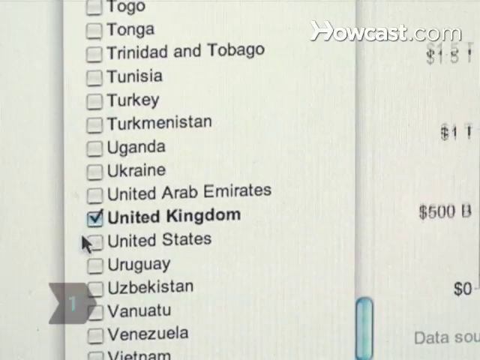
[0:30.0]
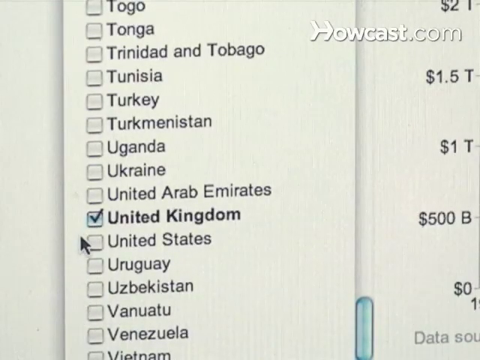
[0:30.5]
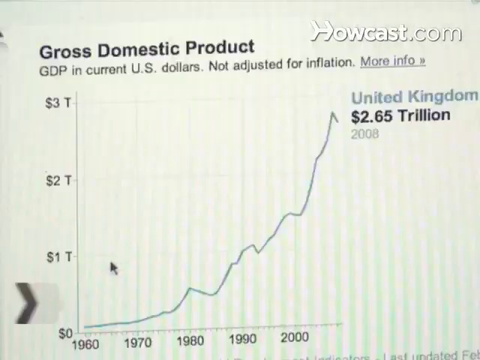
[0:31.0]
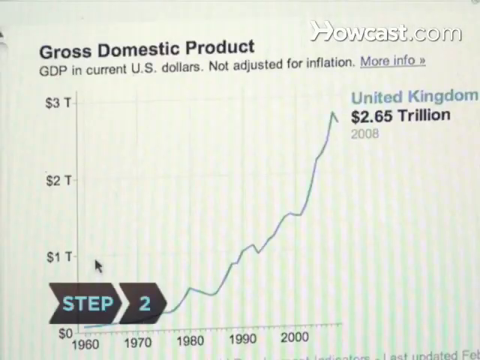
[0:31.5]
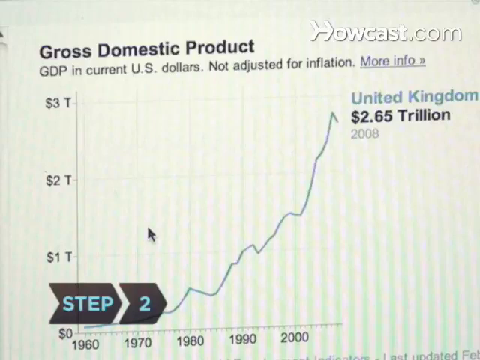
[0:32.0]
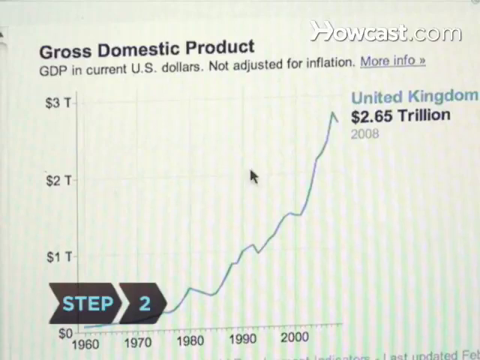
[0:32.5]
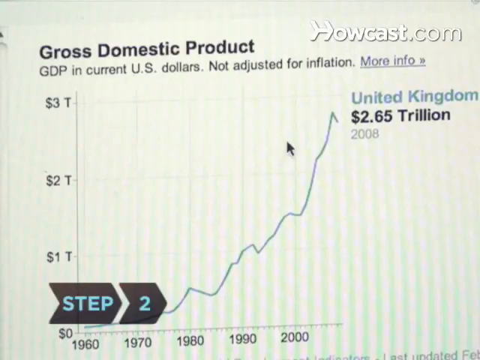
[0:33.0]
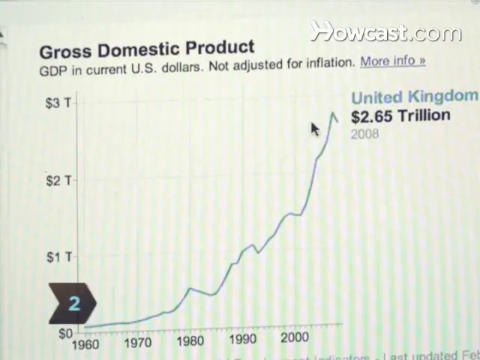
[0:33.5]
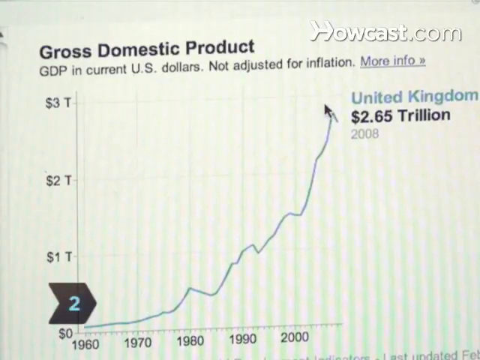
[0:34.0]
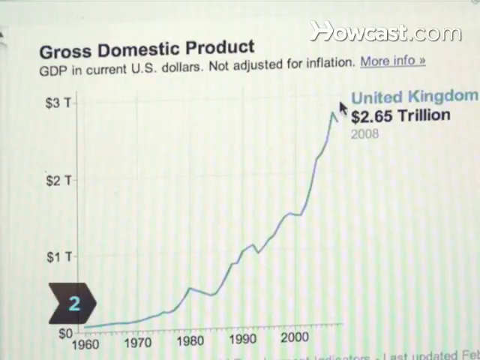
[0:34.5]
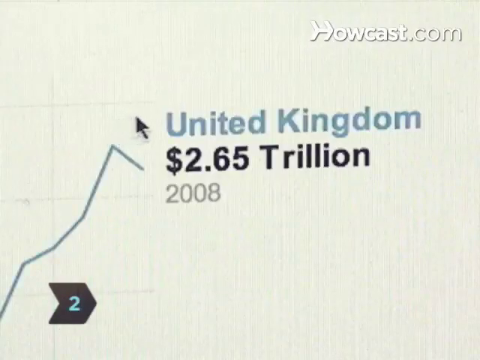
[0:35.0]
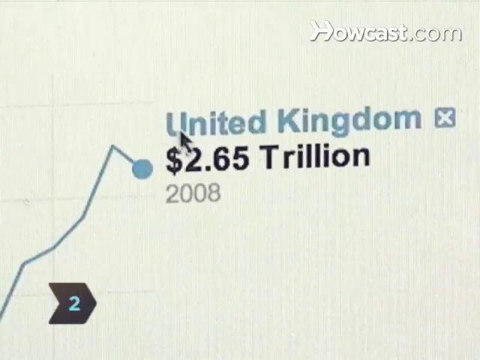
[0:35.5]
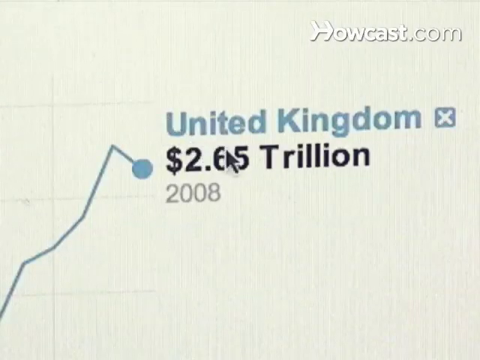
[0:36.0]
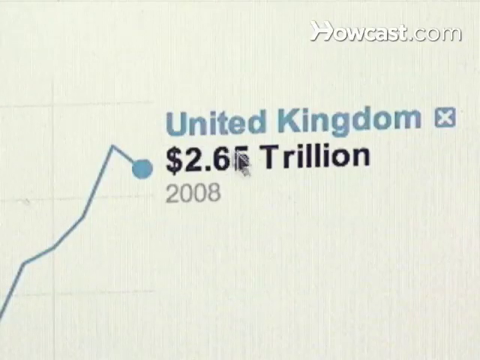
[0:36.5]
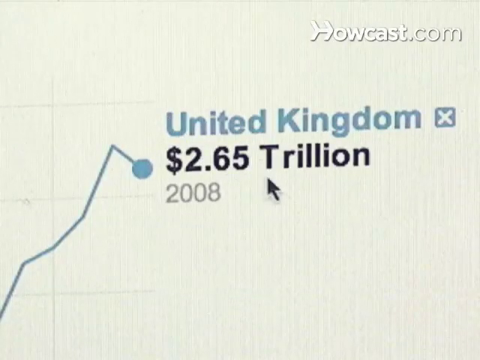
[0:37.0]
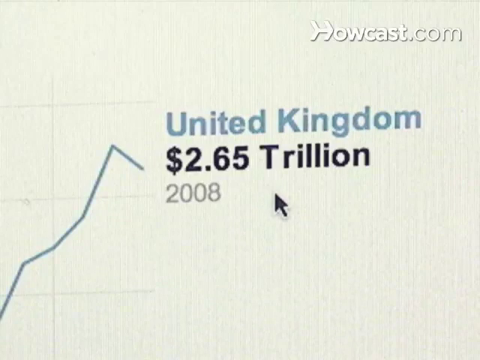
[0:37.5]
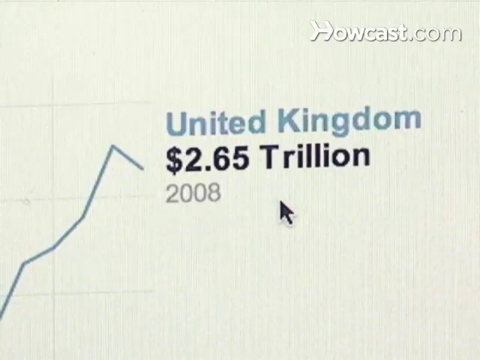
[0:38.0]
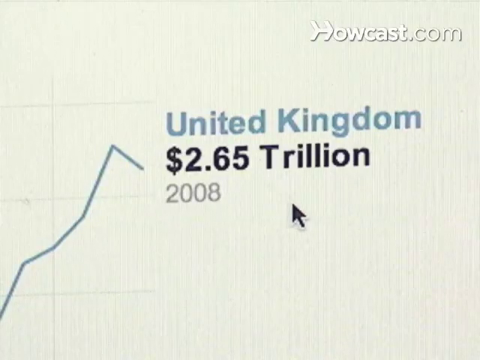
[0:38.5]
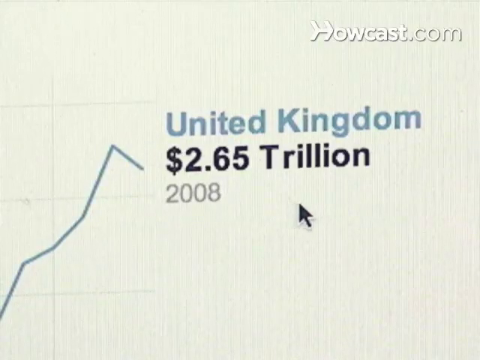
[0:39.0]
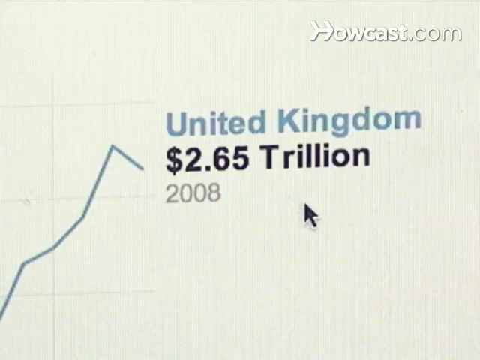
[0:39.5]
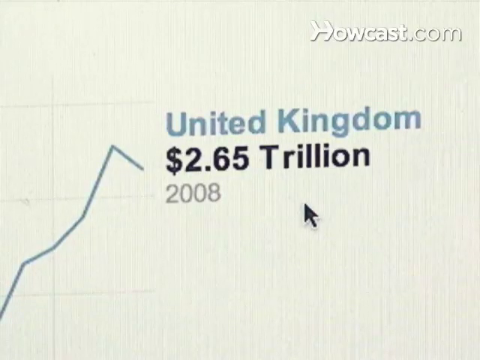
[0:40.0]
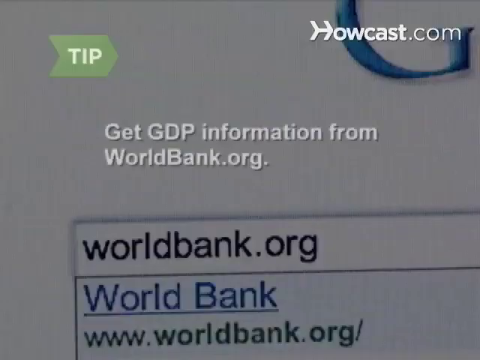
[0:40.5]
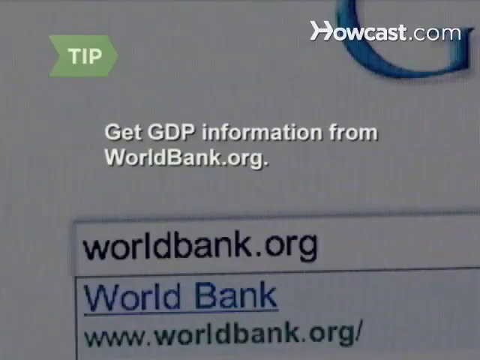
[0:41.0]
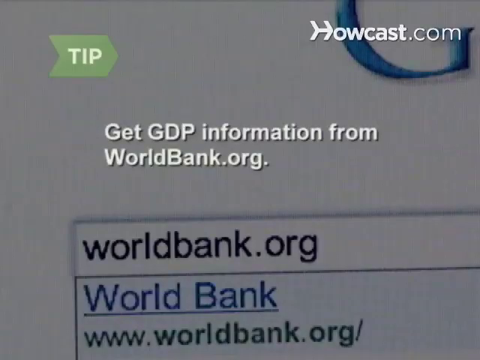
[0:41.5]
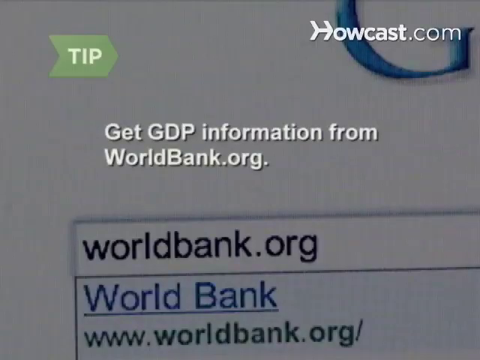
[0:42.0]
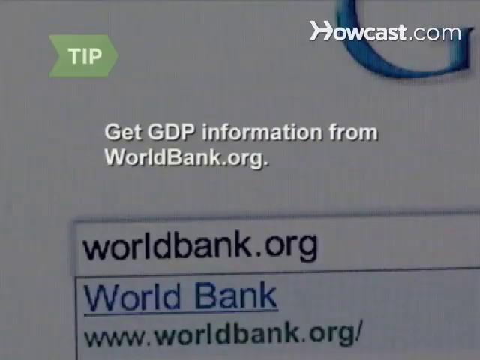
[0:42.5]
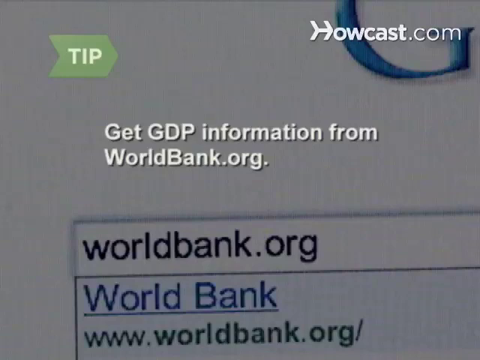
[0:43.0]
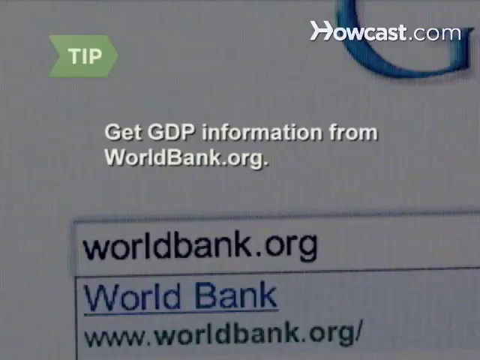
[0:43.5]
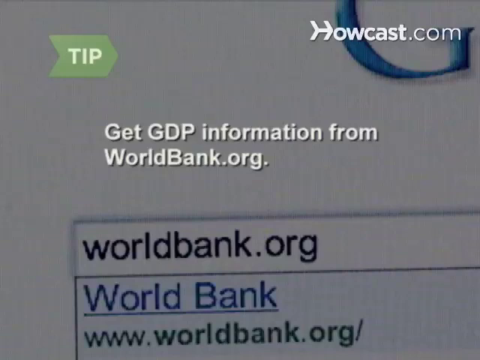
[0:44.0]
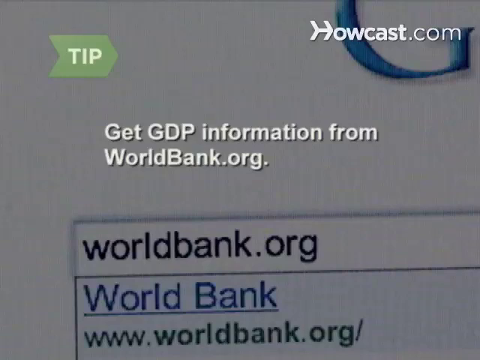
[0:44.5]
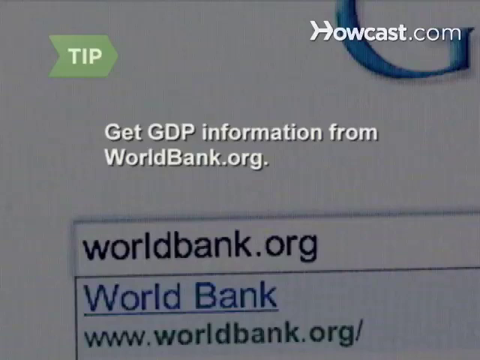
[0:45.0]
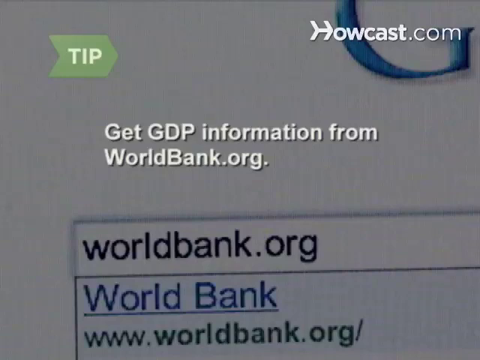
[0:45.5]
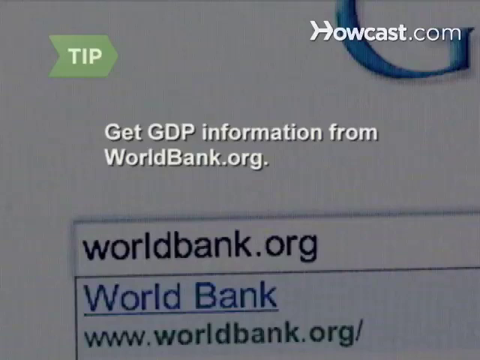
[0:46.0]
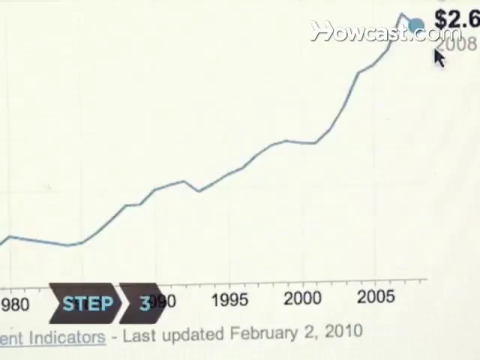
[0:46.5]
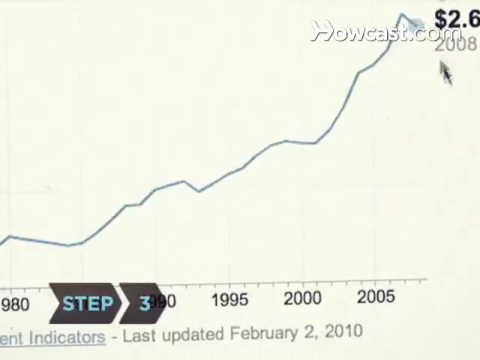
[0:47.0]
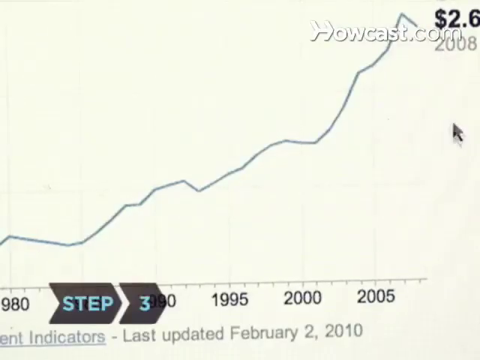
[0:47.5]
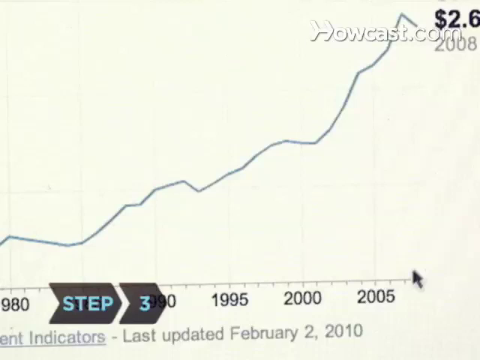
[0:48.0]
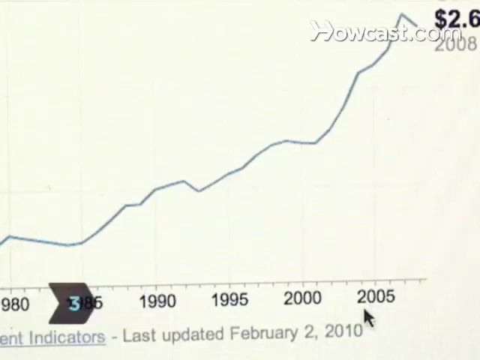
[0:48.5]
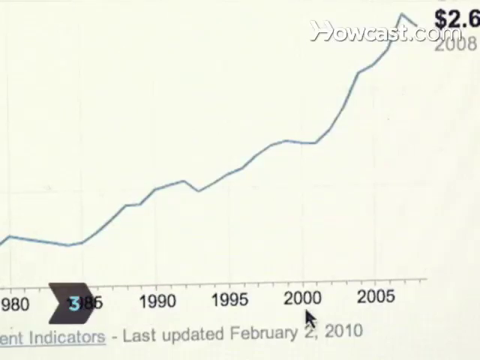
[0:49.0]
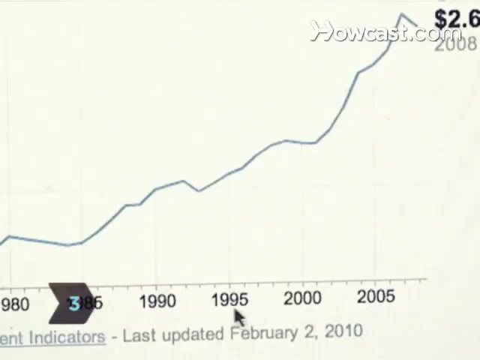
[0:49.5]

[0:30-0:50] The video cuts to a different close-up of a computer screen with a caption at the bottom reading "Step 2" and a line graph. The graph's title is "Gross Domestic Product", and underneath it reads "GDP in current US dollars, not adjusted for inflation", with a link for more info. The side axis shows "$3 trillion", "$2 trillion" and "$1 trillion". A line curves steeply upwards, and next to it is the text "United Kingdom, $2.65 trillion, 2008". The cursor moves around the screen, and the video cuts to a close-up of the text "United Kingdom 2.65 trillion dollars 2008". A transparent black layer then appears over the footage with a caption reading "get GDP information from worldbank.org"; behind it is a photograph of a Google screen in which someone has typed "worldbank.org".